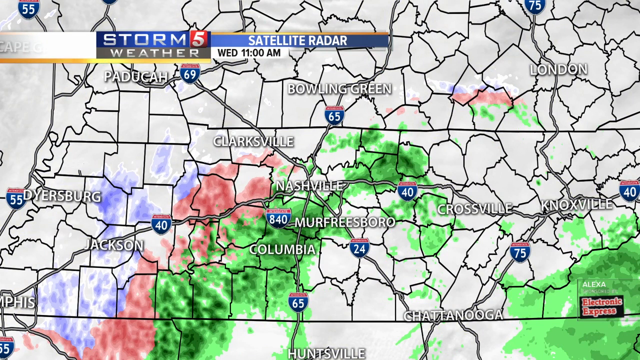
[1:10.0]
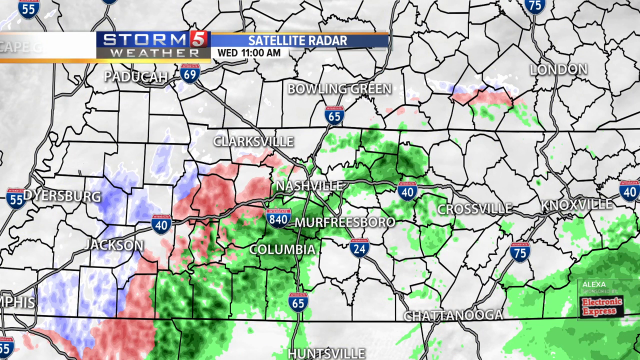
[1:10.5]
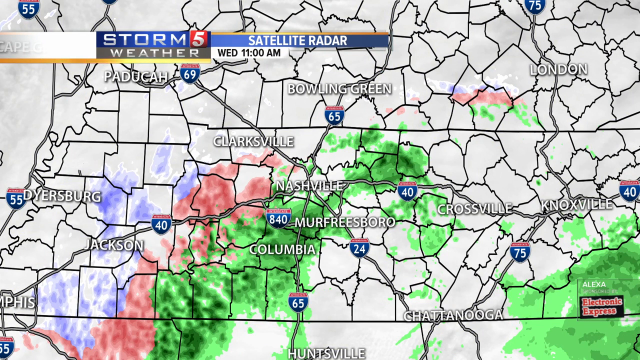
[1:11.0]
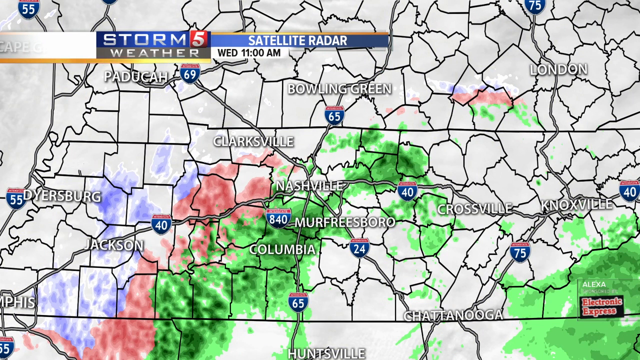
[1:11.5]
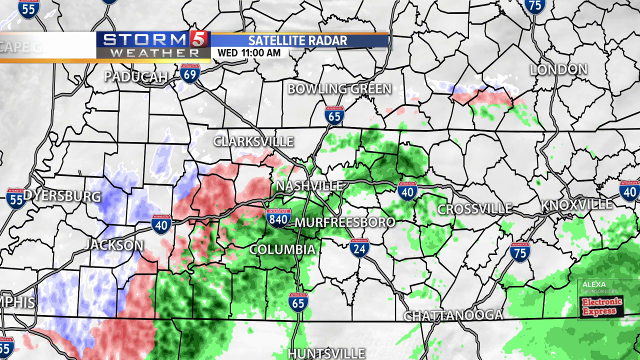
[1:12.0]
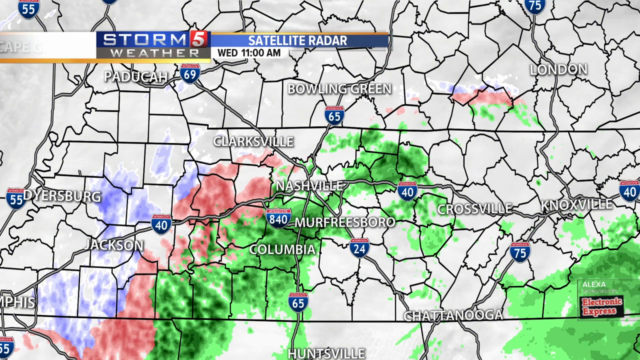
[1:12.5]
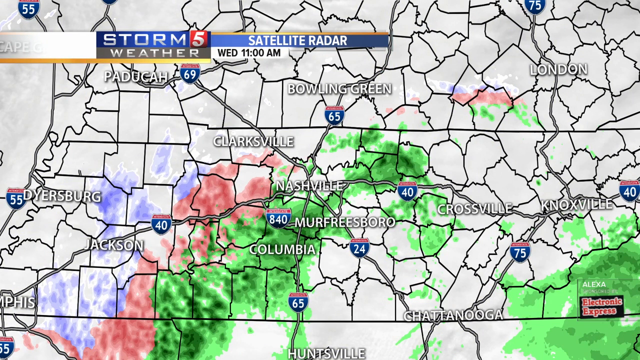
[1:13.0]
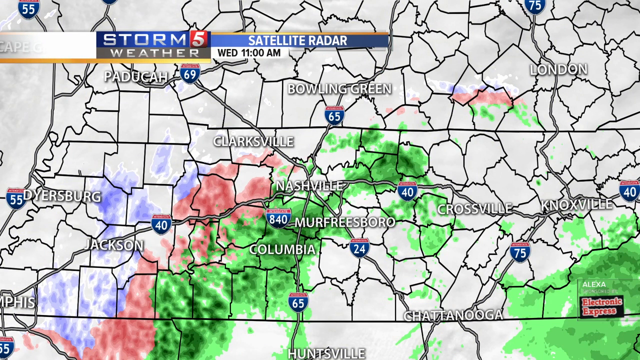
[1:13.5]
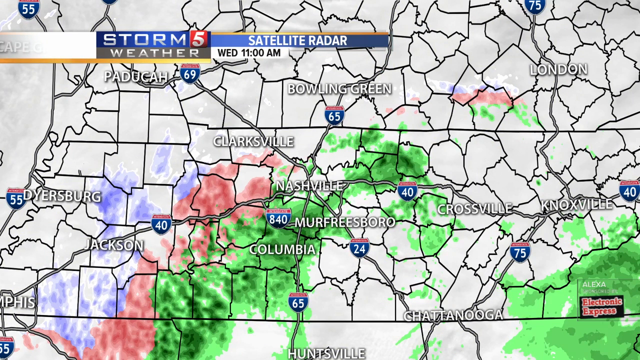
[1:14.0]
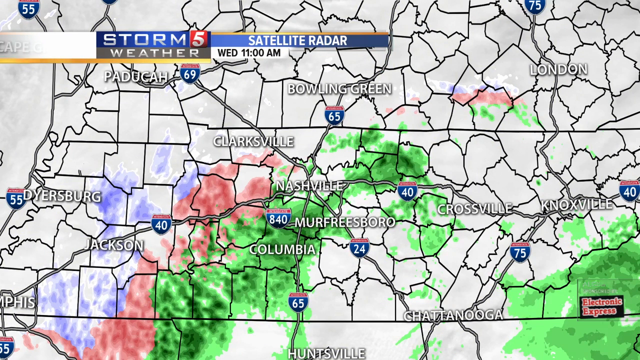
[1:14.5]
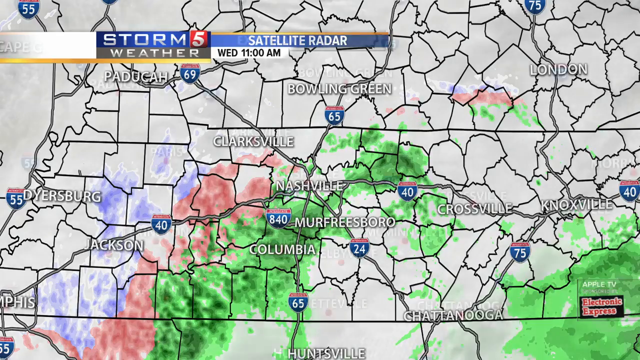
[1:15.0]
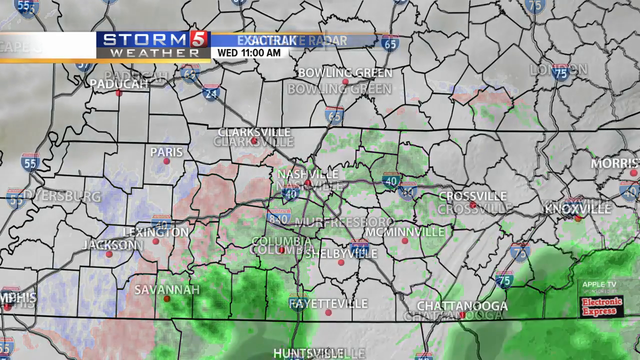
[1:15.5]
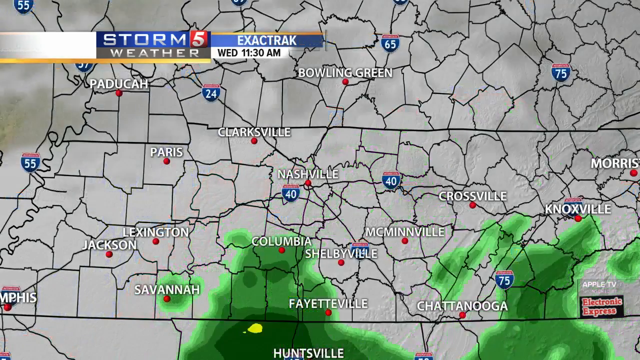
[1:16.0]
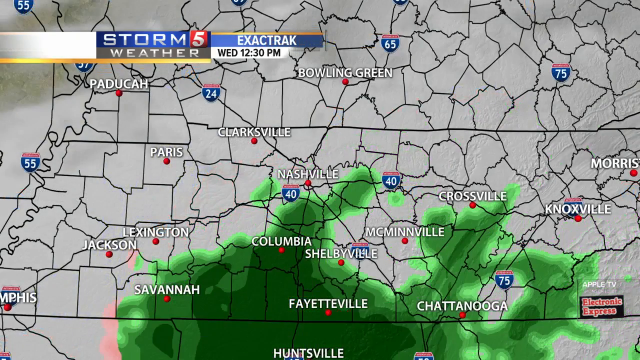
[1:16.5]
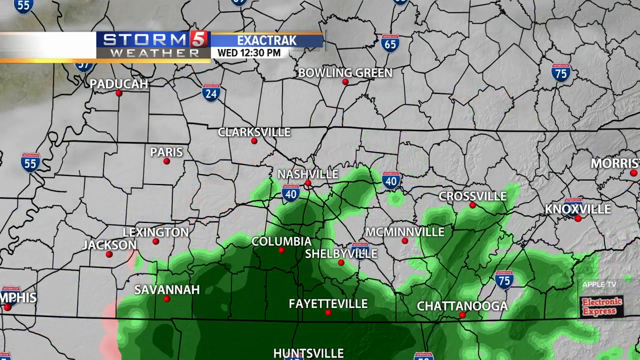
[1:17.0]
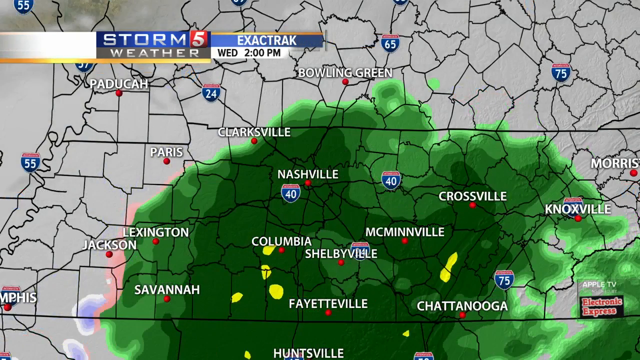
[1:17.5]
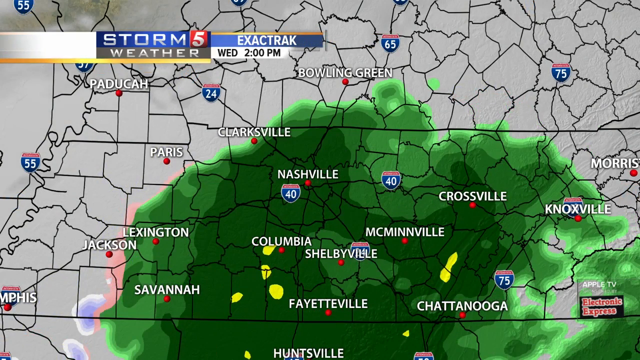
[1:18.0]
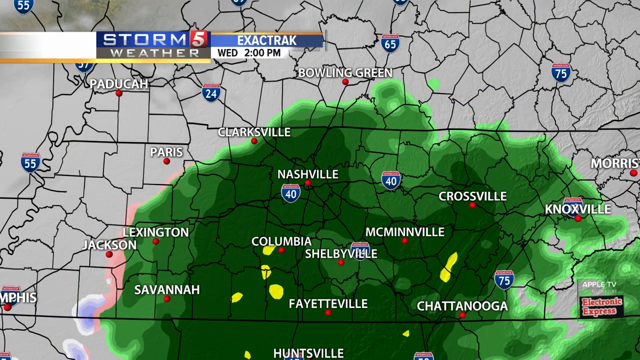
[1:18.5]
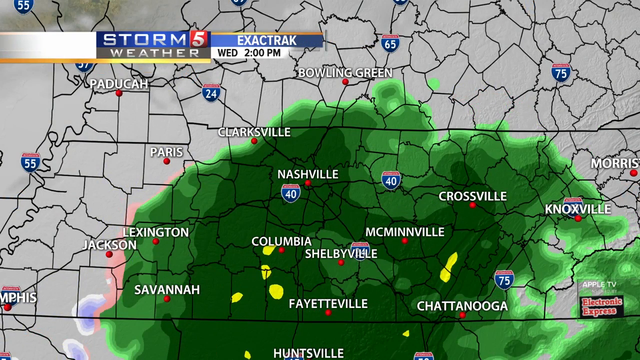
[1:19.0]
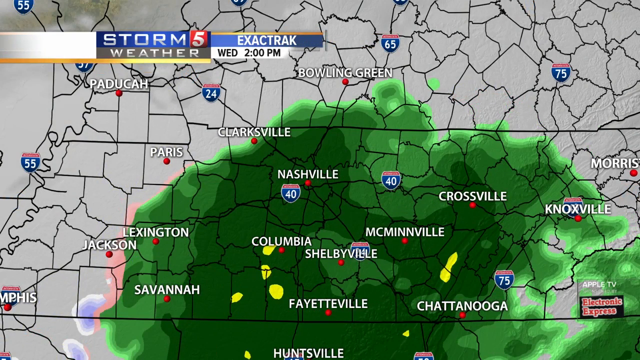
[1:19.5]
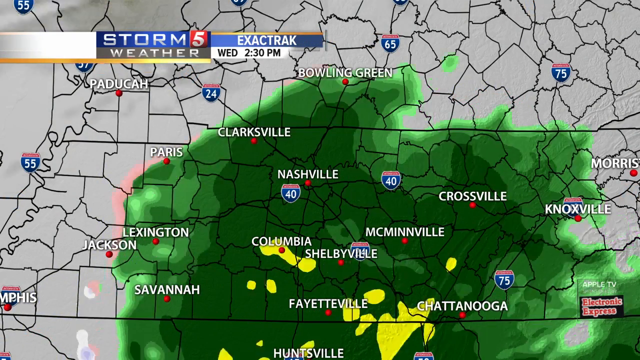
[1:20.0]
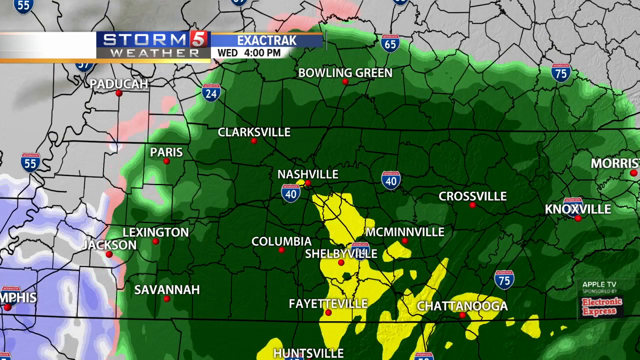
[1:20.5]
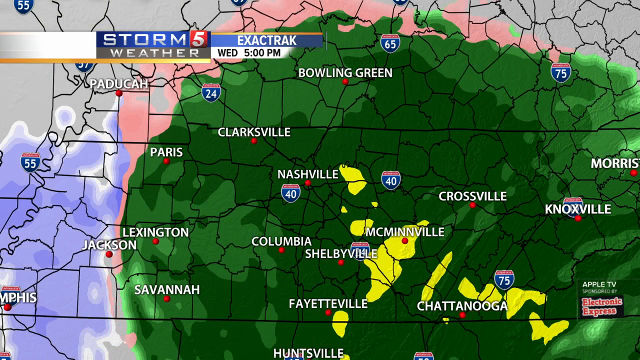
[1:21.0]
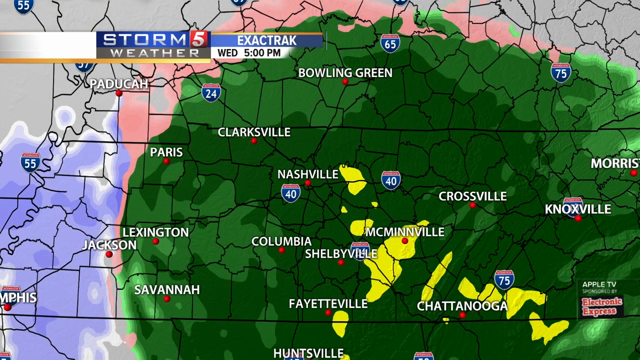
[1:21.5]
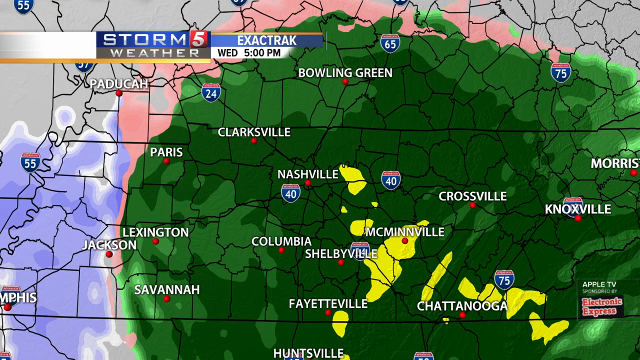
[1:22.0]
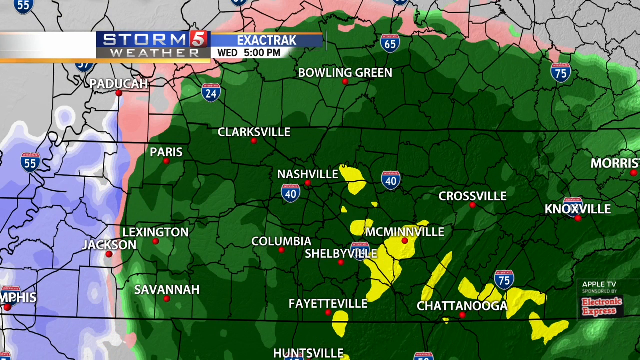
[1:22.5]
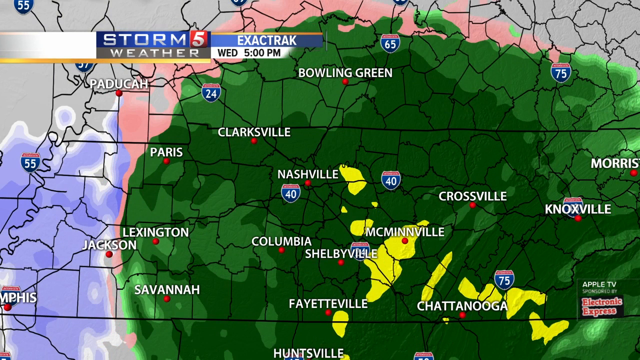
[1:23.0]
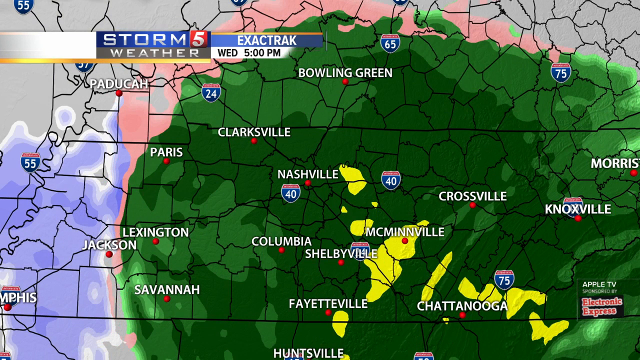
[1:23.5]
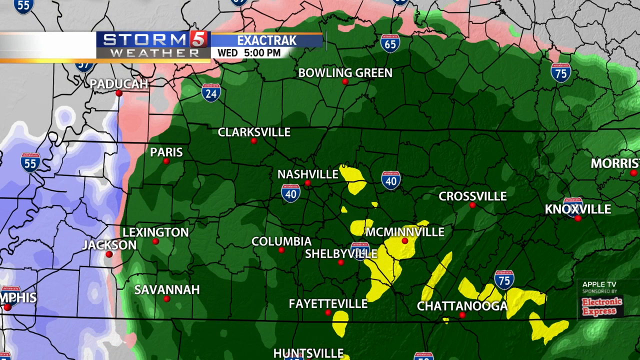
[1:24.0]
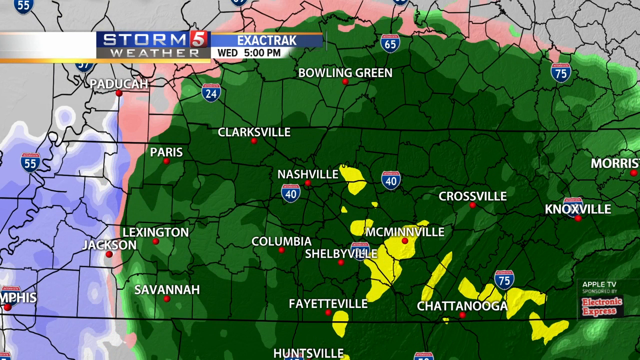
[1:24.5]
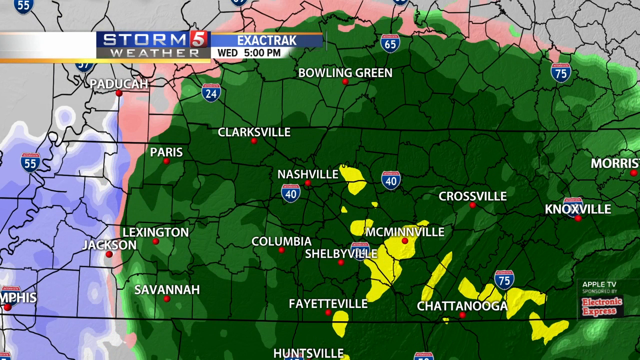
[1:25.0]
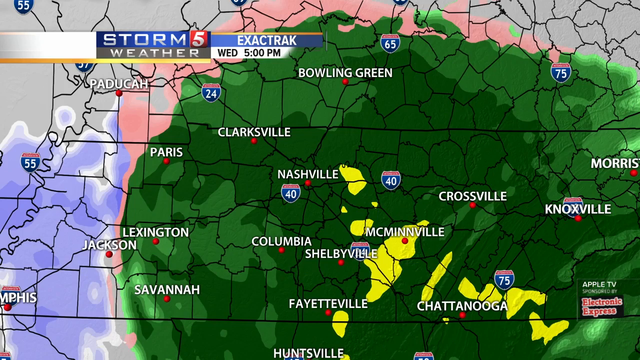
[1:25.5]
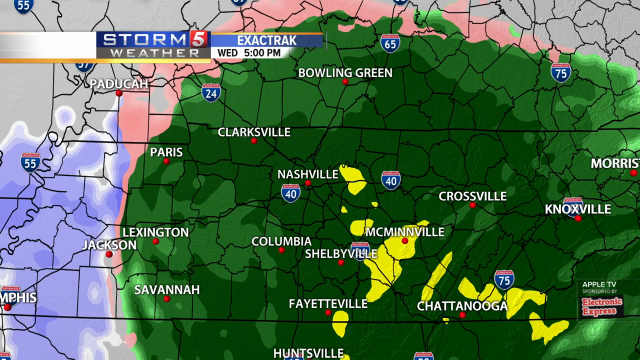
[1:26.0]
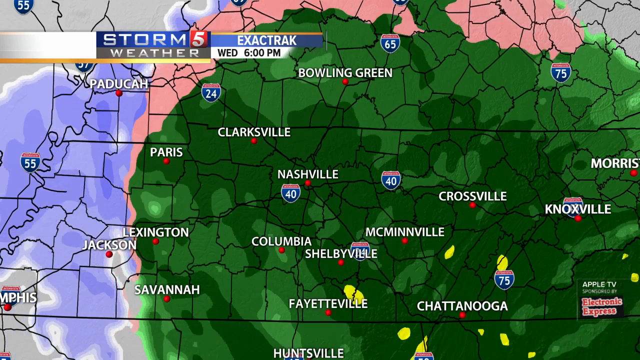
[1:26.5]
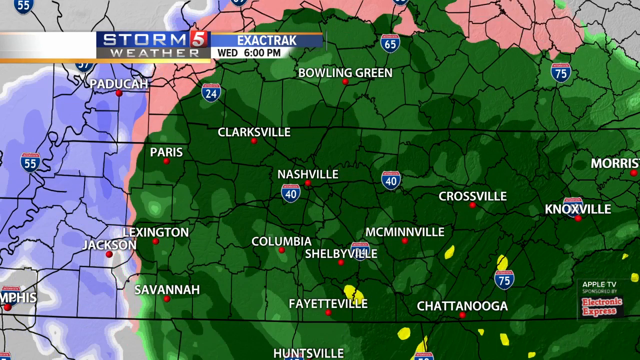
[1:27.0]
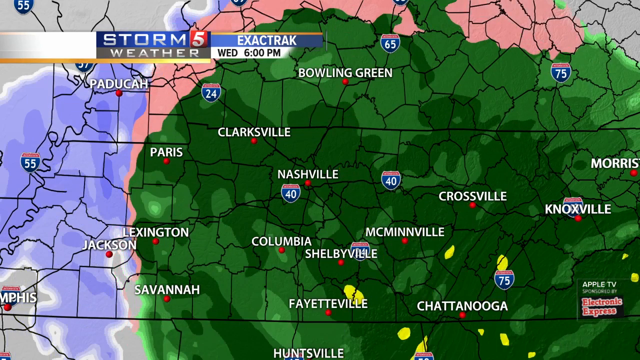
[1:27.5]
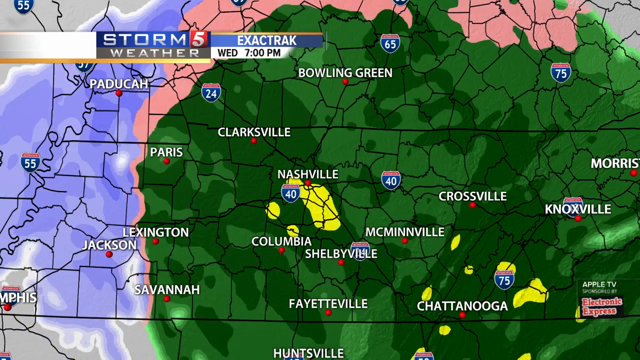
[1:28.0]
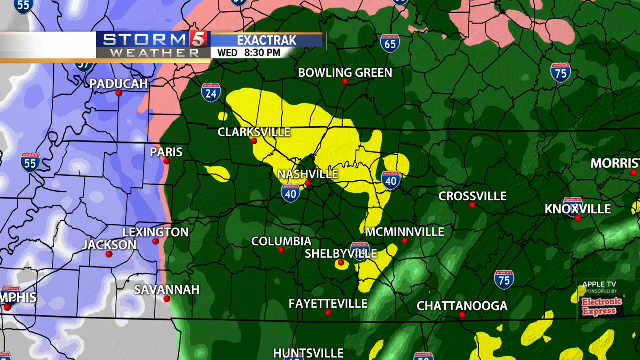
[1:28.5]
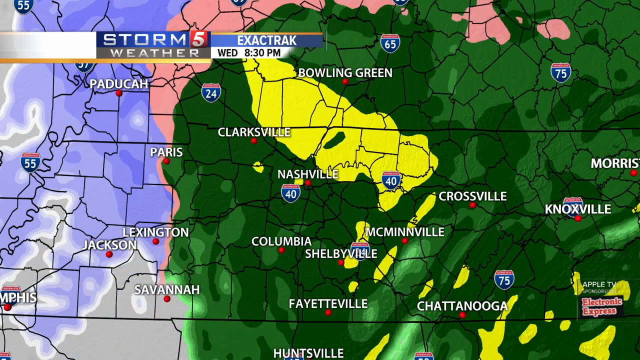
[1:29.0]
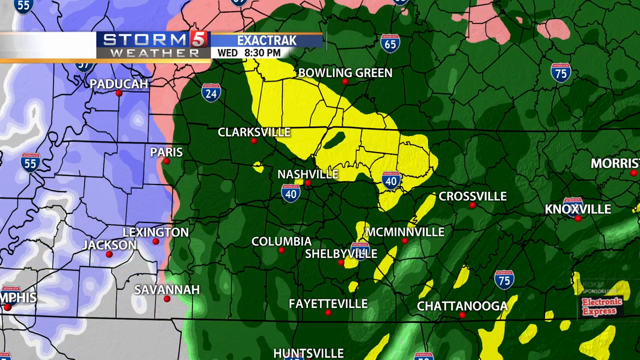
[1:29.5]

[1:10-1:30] Winter temperatures are shown for areas including London, Crossville, Norfolk, Dresden, Speck, Columbia, Huntsville and Chattanooga. Temperatures are also shown for Dresden, Speck, Jackson, Clarksville and Bowling Green, with values of 65, 14, 75 and 40 degrees. A satellite view of the area shows a grayish color around London, a purplish color around Parry, and green around Knoxville, none of which is explained. The area around Clarksville is covered in green, and behind the pinkish and purplish colors, the areas are covered with yellow and dark green.